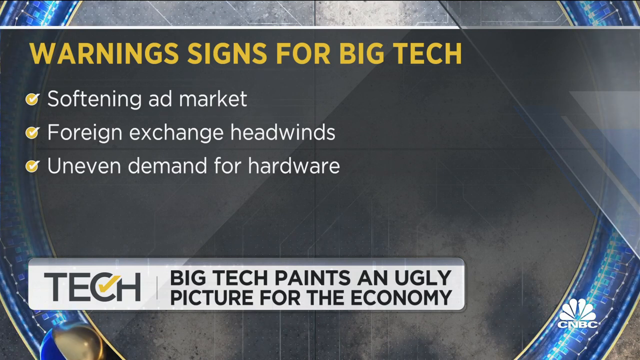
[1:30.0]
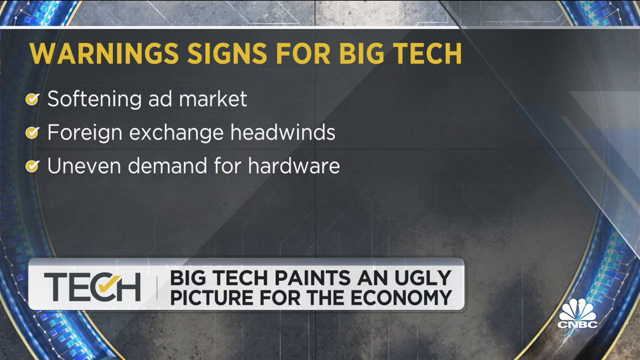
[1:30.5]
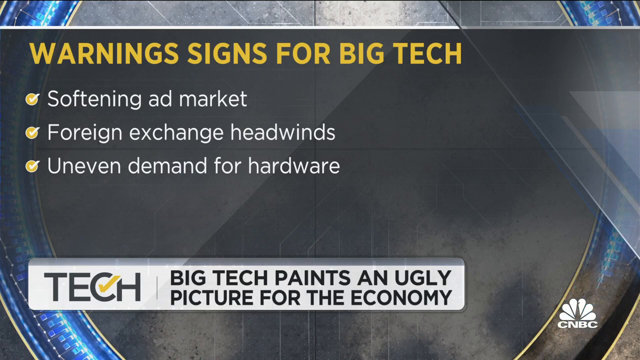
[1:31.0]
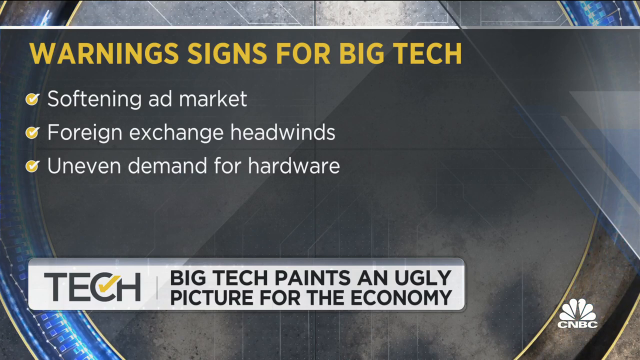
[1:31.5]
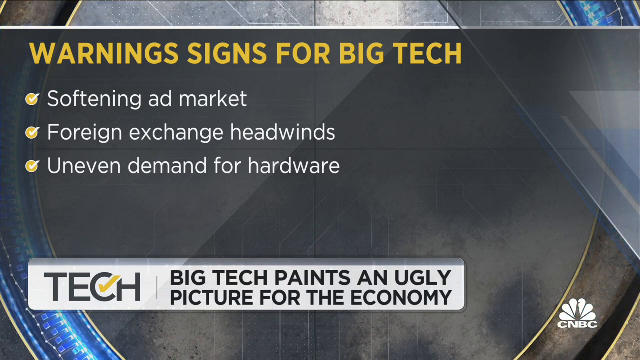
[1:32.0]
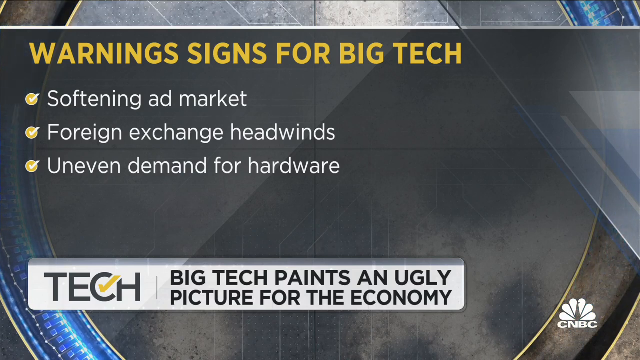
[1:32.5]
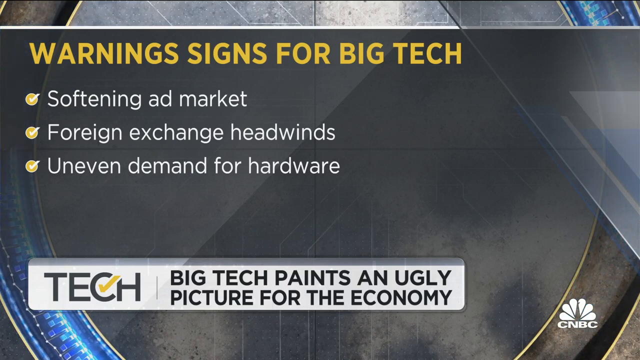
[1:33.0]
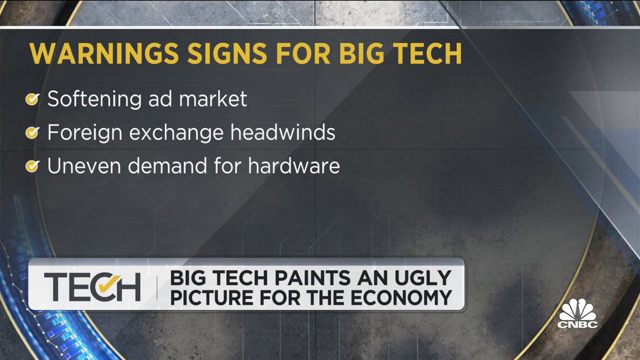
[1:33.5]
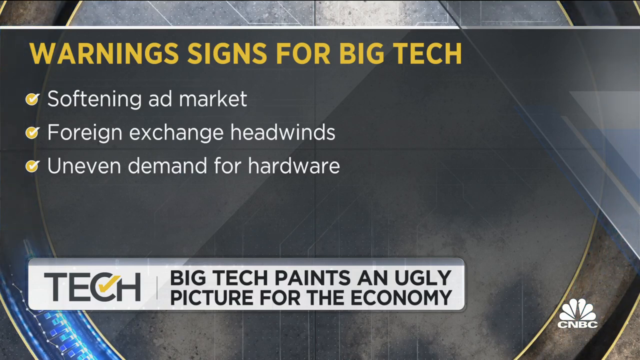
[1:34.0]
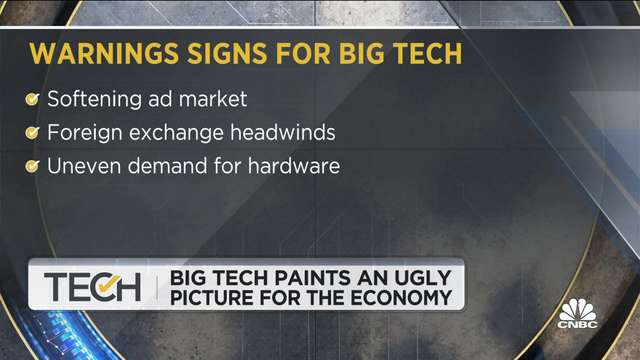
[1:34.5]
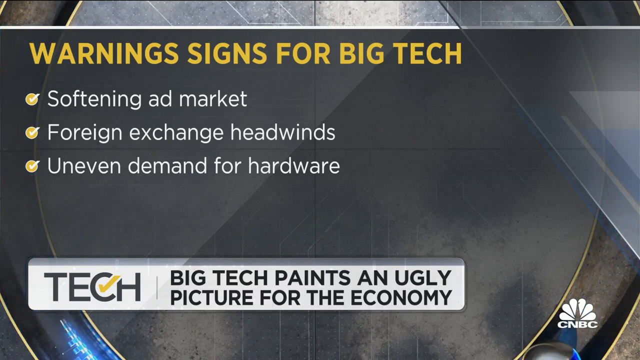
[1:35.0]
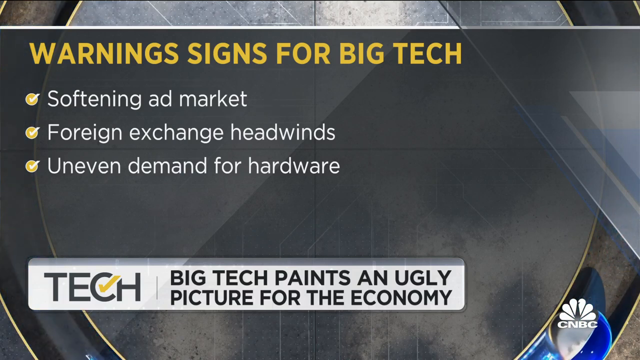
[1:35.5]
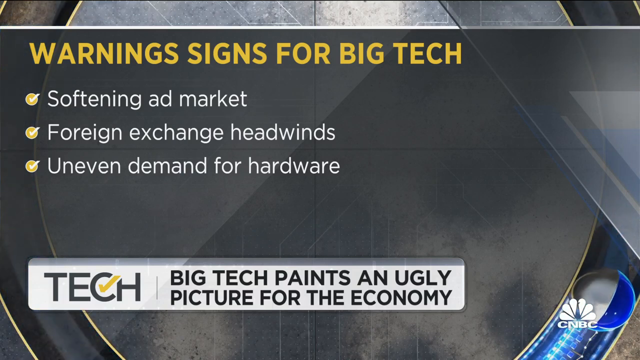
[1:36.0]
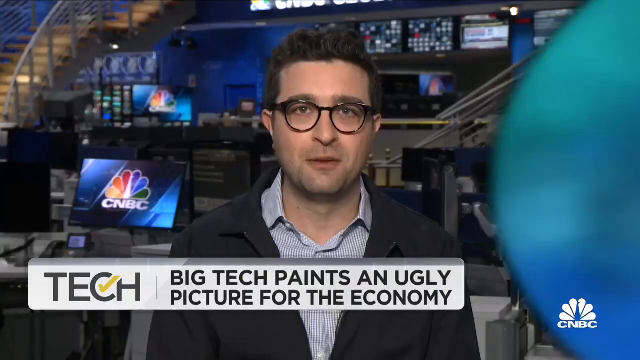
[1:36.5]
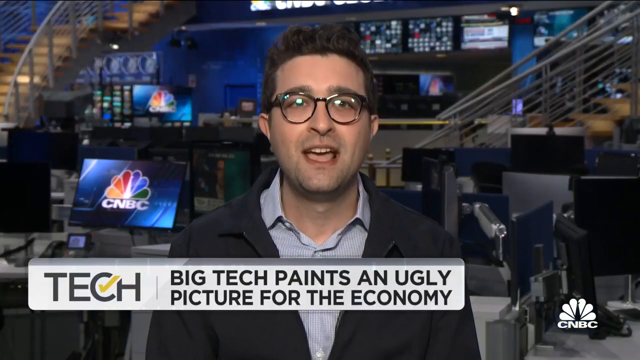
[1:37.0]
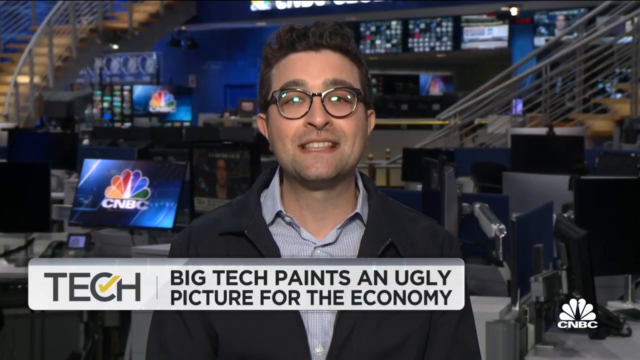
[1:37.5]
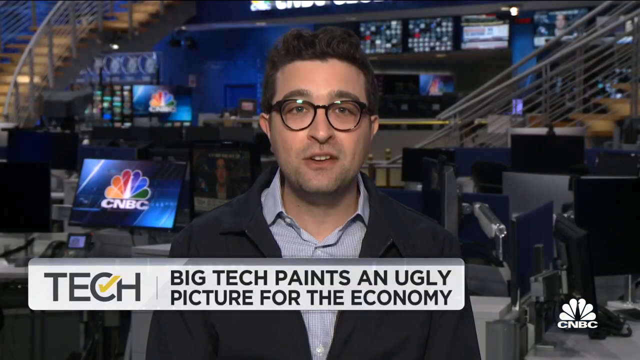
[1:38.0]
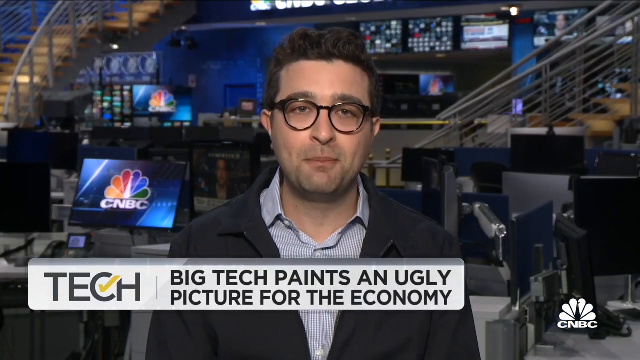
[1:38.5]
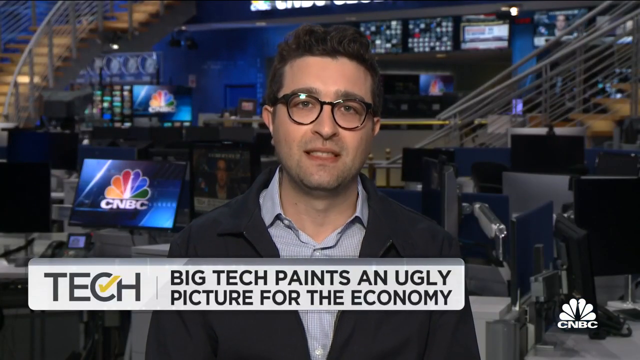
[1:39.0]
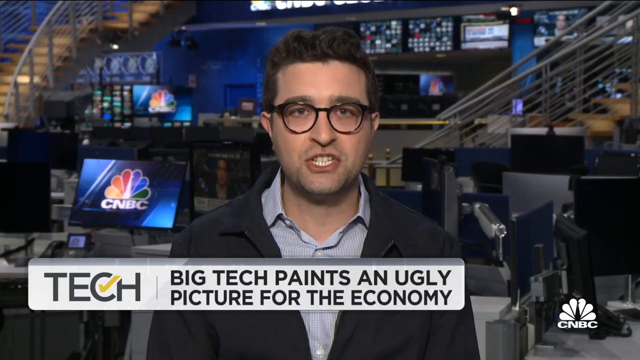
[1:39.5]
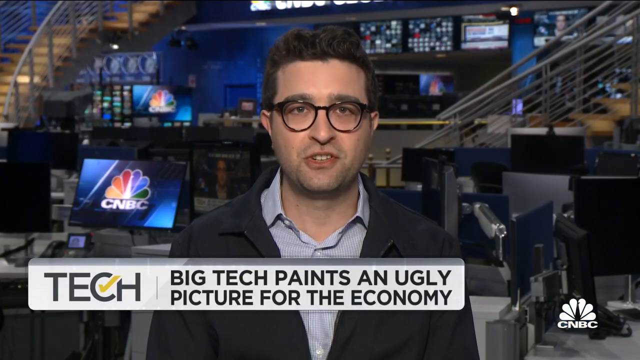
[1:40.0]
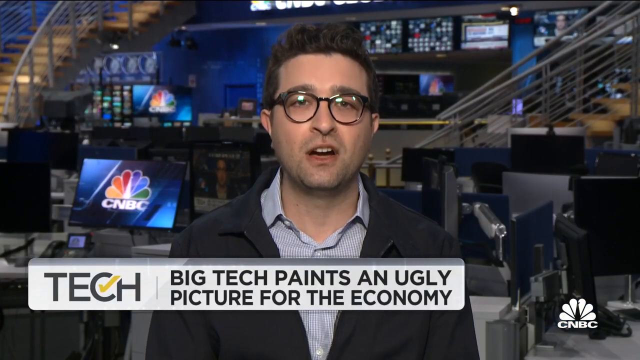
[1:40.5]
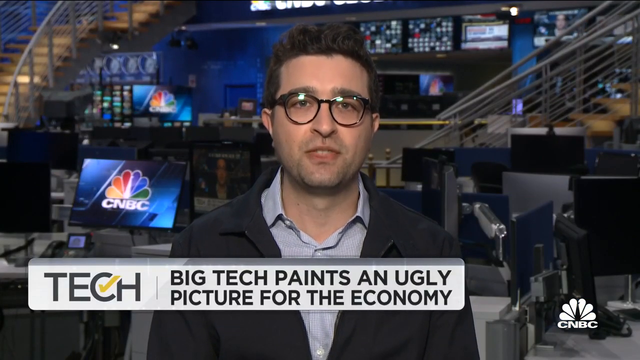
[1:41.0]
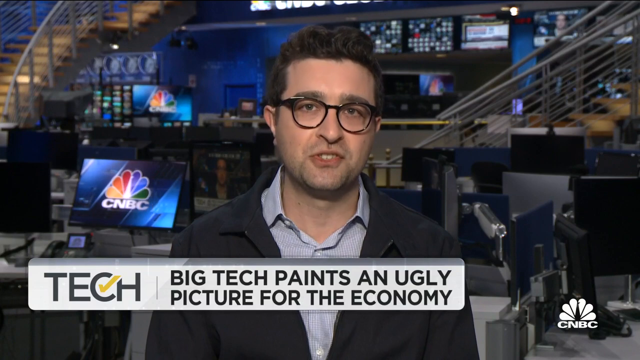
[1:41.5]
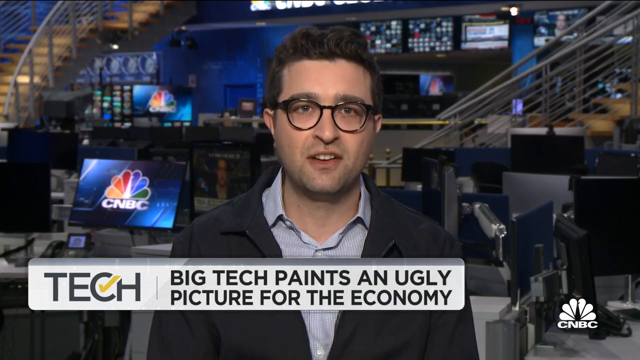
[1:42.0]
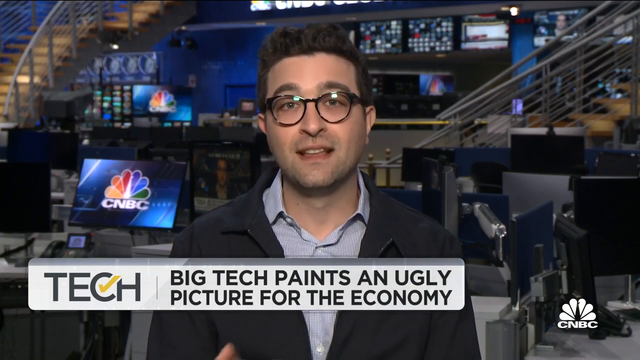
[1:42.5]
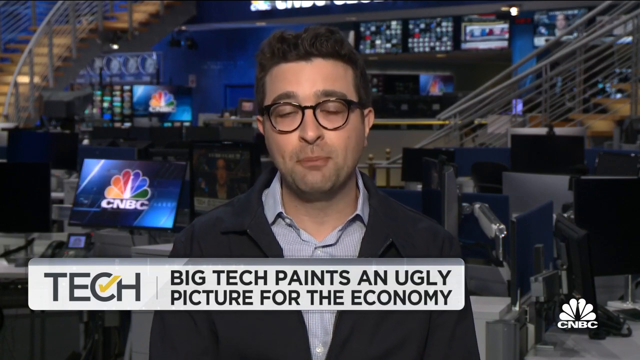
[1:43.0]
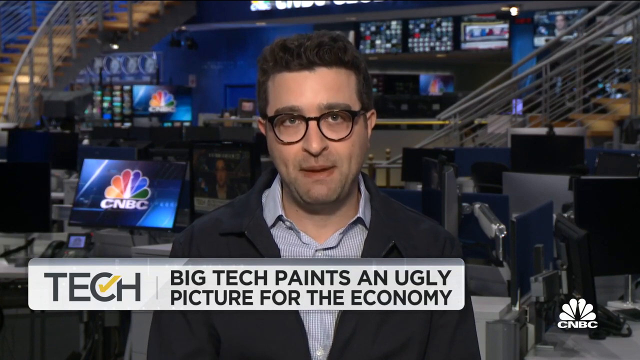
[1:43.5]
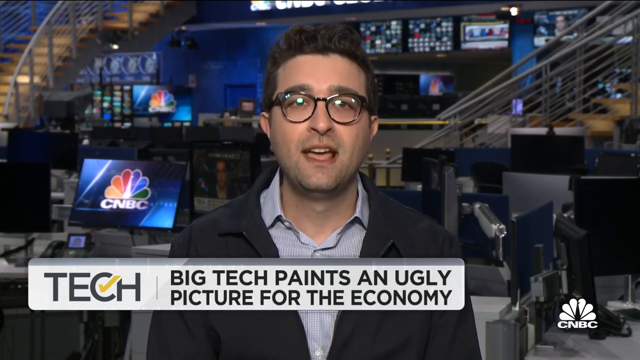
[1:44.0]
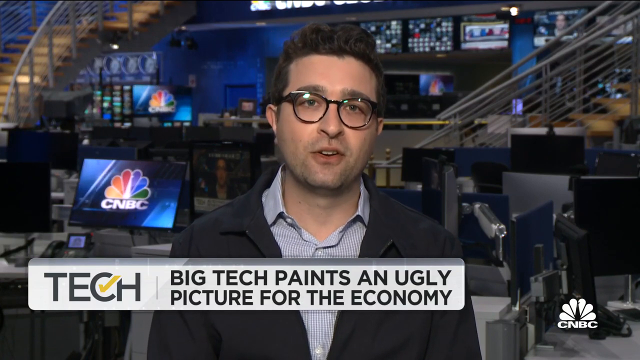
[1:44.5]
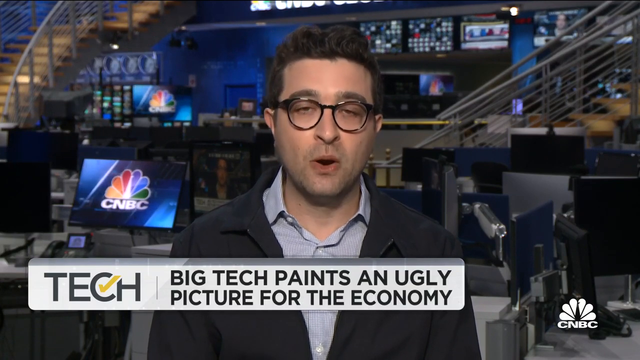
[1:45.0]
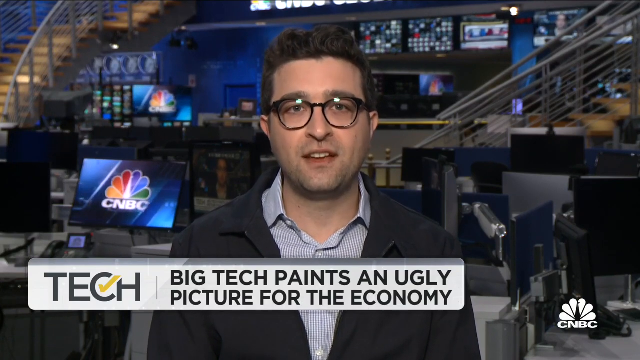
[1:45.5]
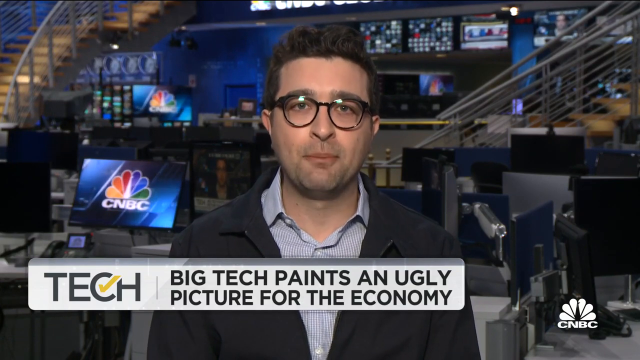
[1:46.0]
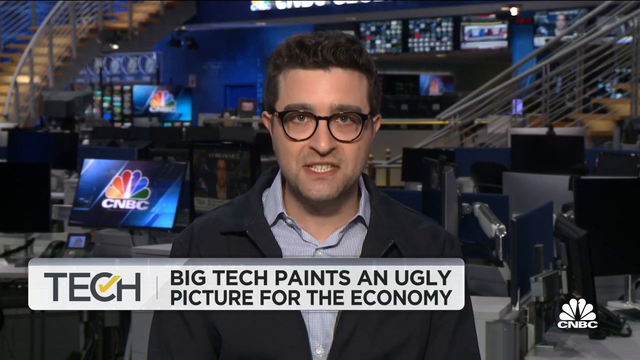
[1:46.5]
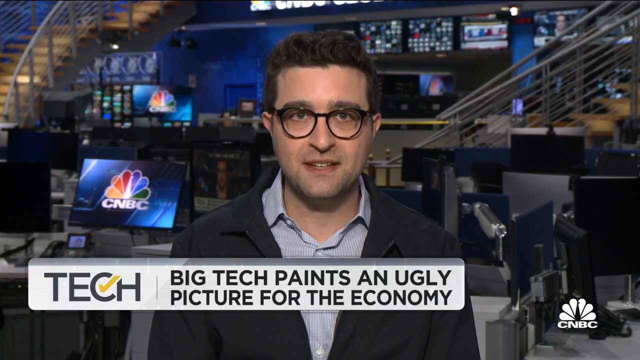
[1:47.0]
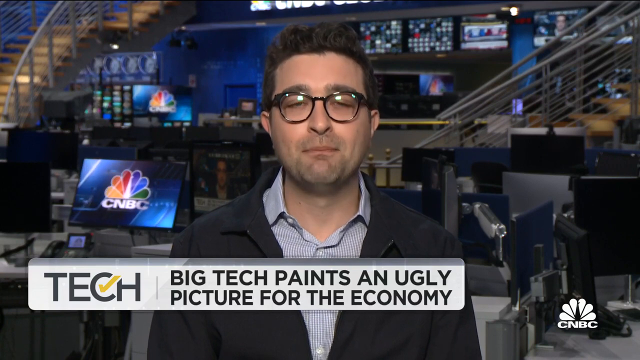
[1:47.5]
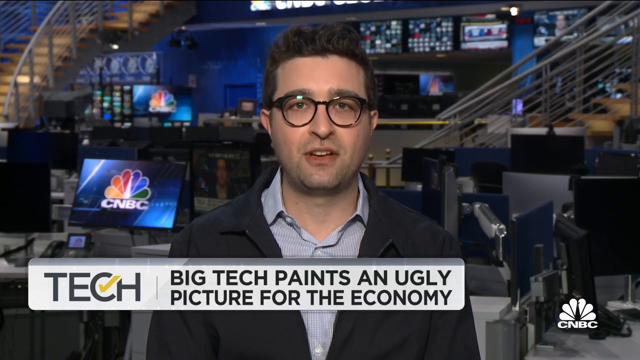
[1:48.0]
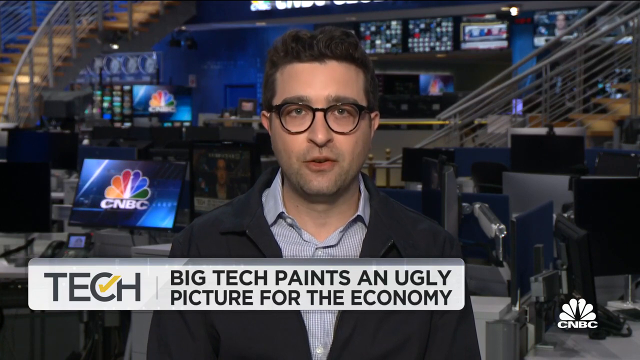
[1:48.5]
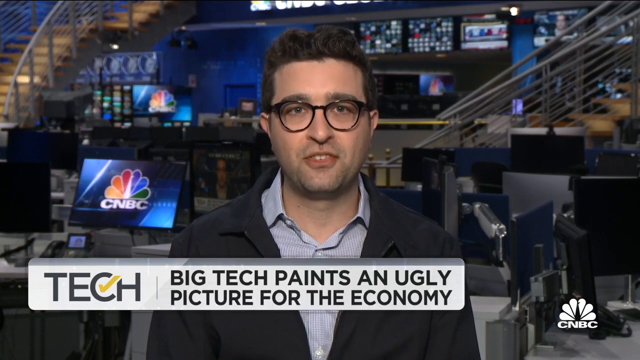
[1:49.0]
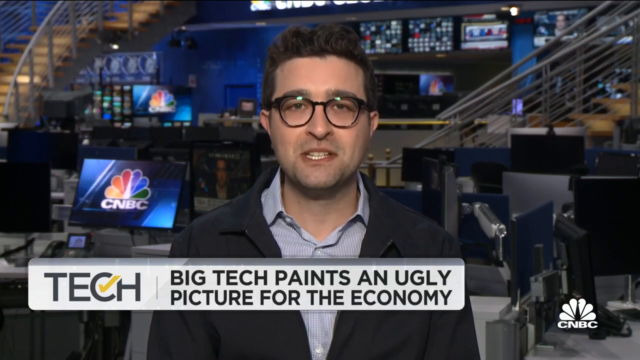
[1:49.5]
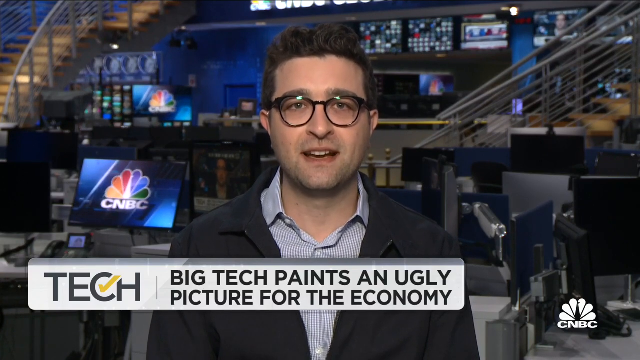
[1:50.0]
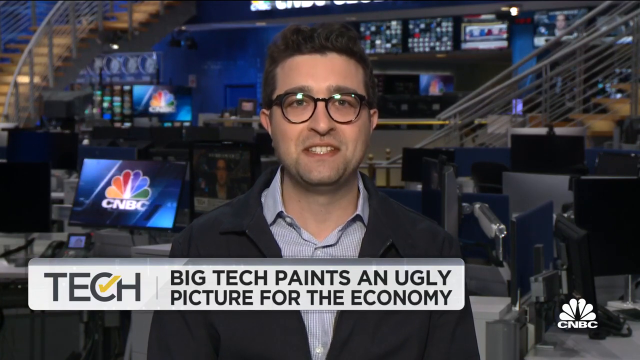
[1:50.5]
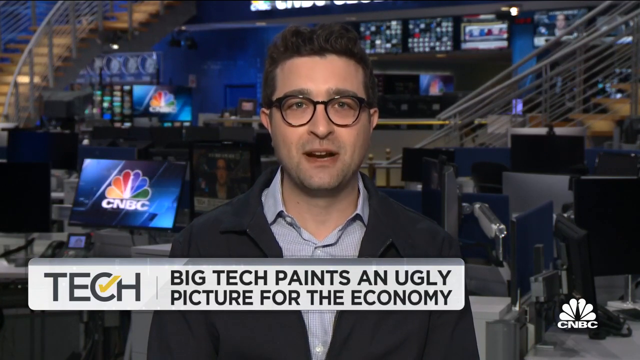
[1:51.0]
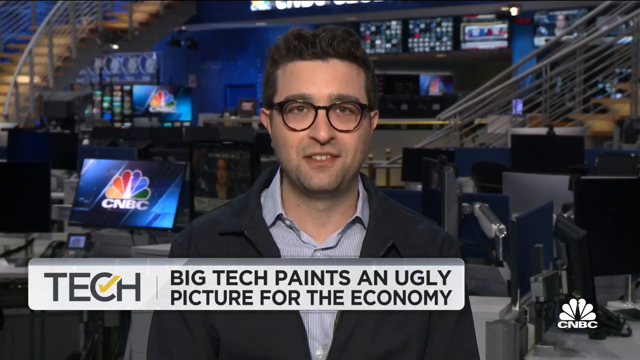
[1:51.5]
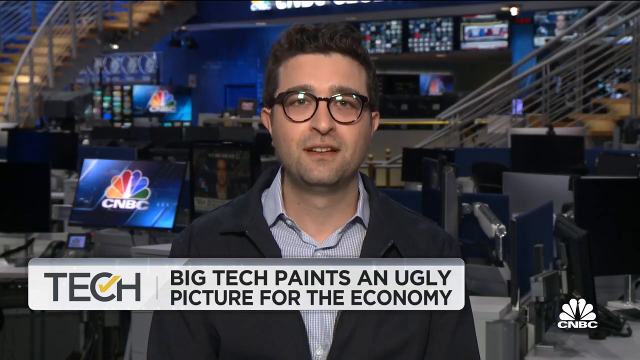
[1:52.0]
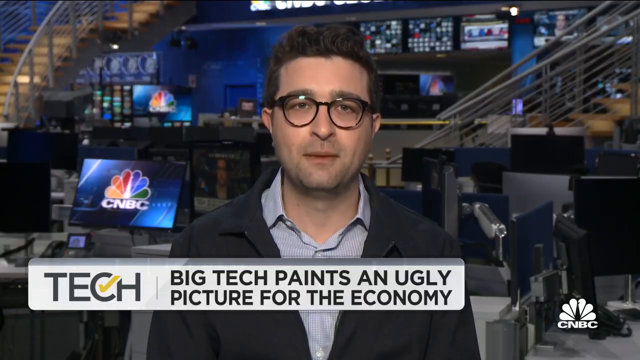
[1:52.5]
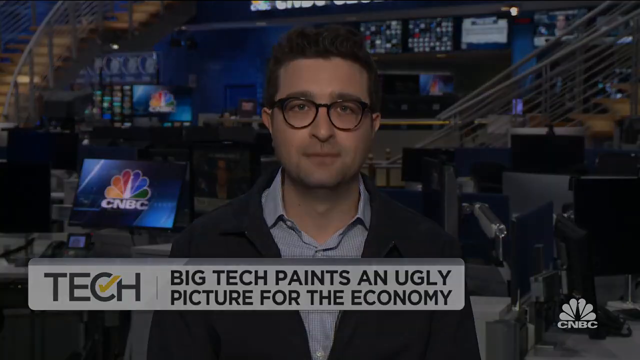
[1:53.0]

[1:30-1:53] The CNBC story about big tech painting an ugly picture for the economy continues with the warning signs for big tech: a softening ad market, foreign exchange headwinds, and uneven demand for hardware. The video then cuts back to the Caucasian male correspondent in the CNBC newsroom. He wears glasses, a black jacket, and a blue and white striped shirt, with a small microphone attached to his jacket. In the background are several monitors with the CNBC logo, a staircase on the left, and a staircase on the right.